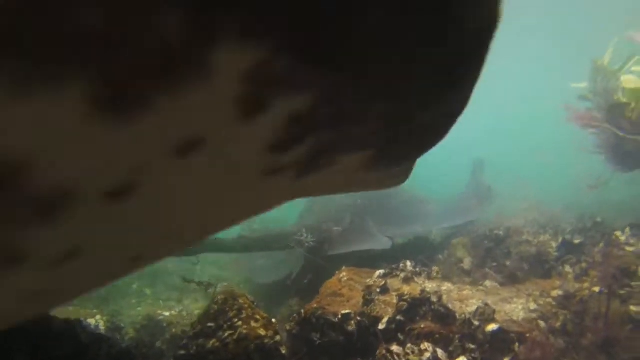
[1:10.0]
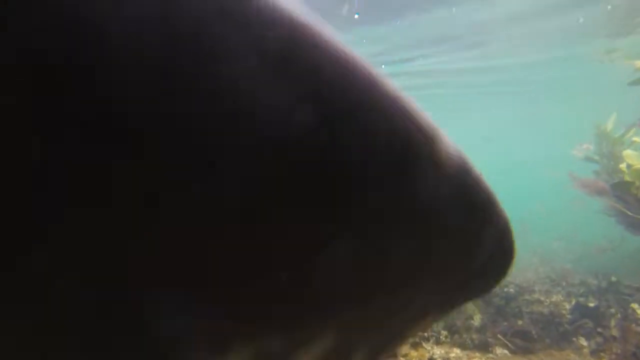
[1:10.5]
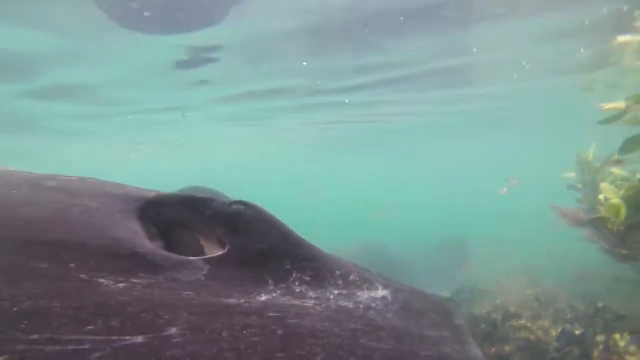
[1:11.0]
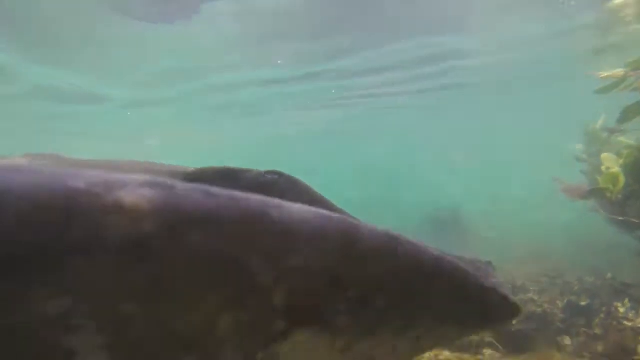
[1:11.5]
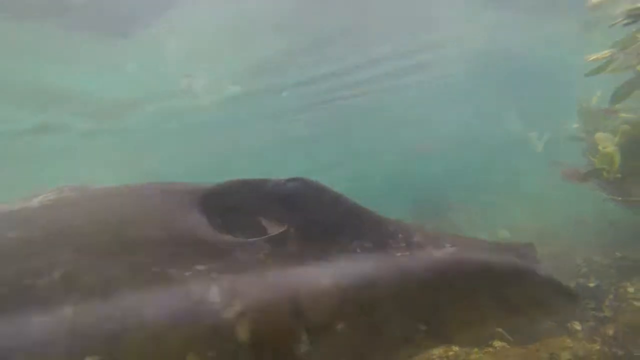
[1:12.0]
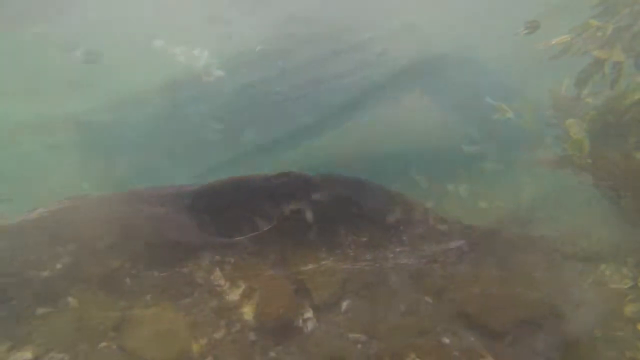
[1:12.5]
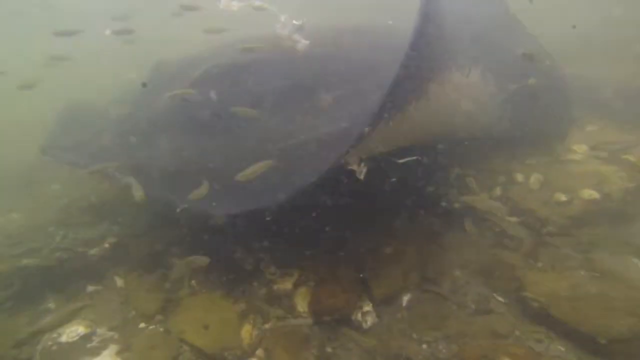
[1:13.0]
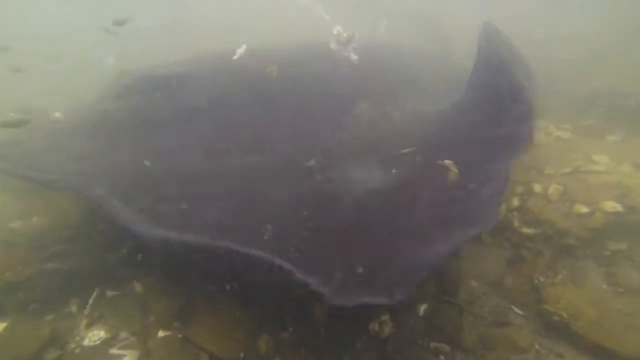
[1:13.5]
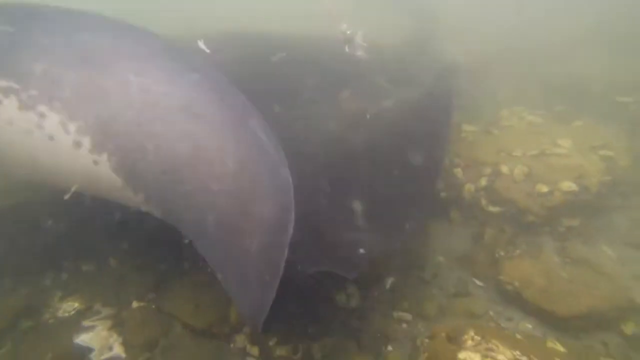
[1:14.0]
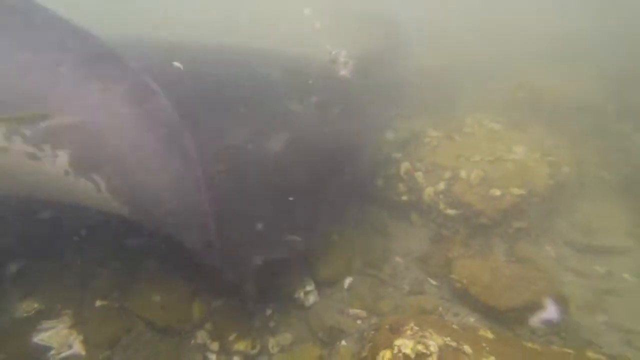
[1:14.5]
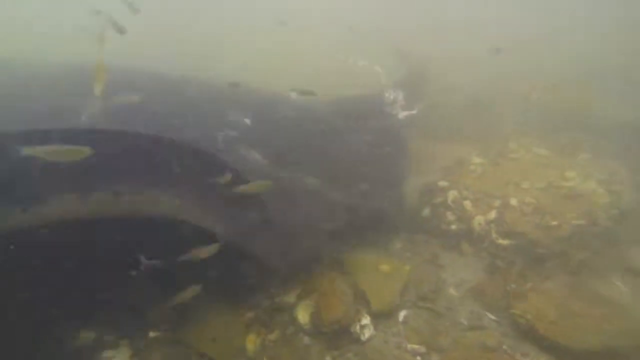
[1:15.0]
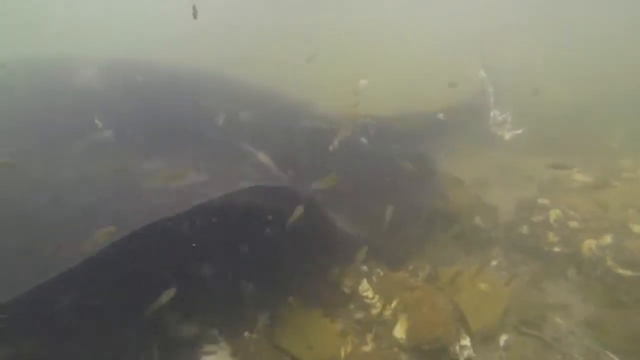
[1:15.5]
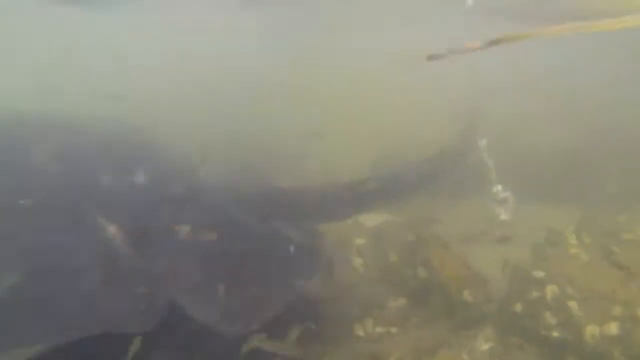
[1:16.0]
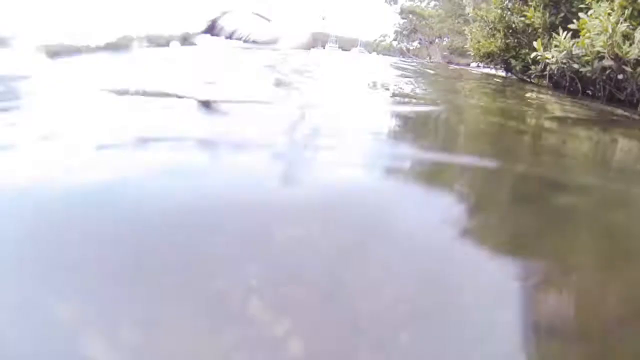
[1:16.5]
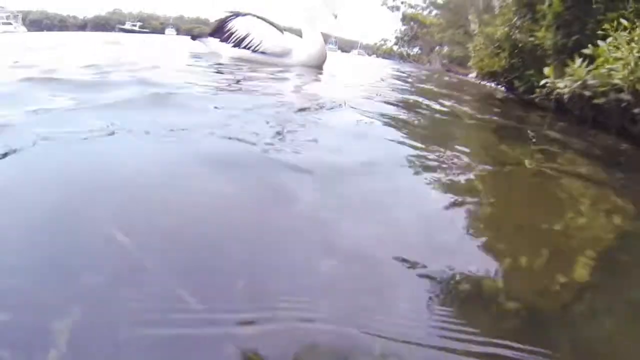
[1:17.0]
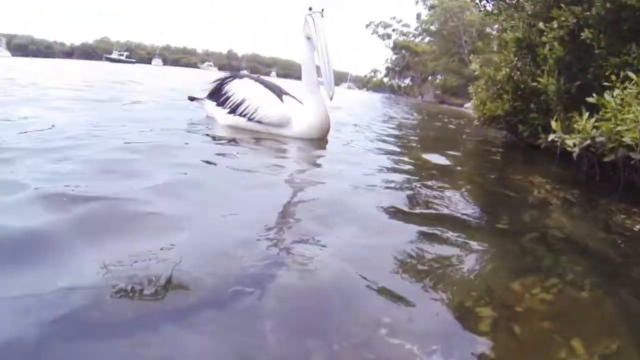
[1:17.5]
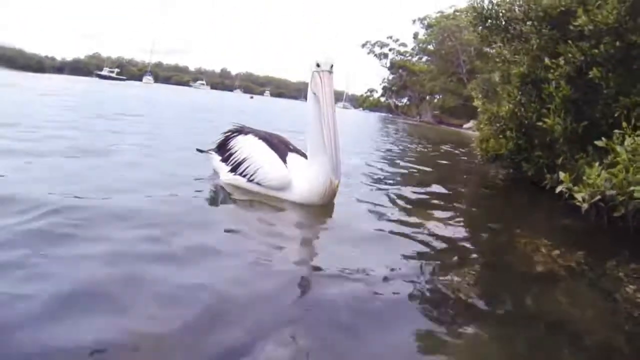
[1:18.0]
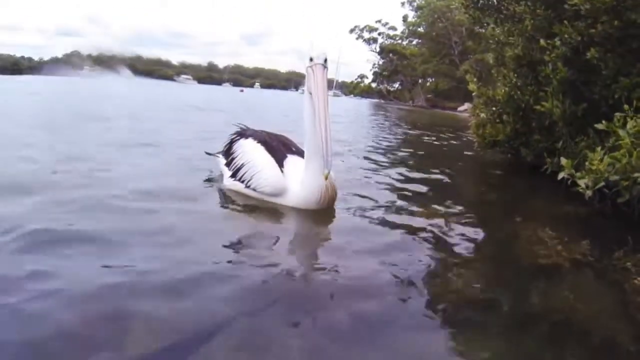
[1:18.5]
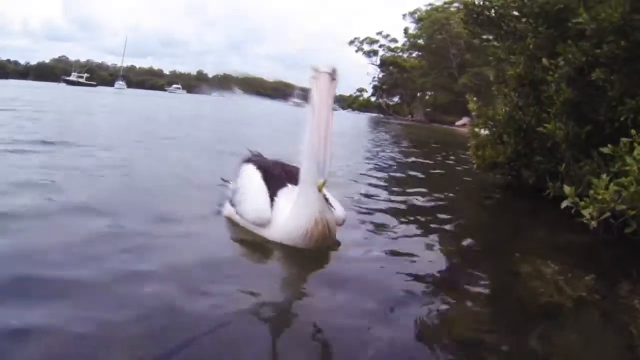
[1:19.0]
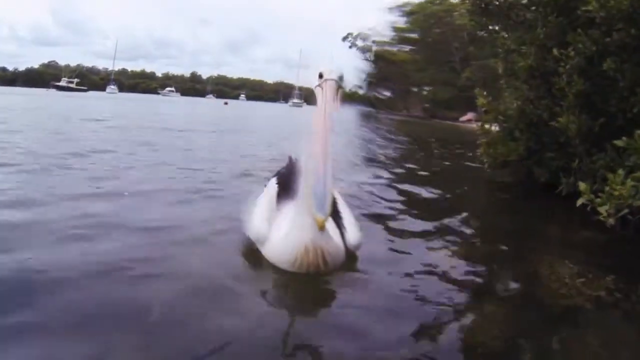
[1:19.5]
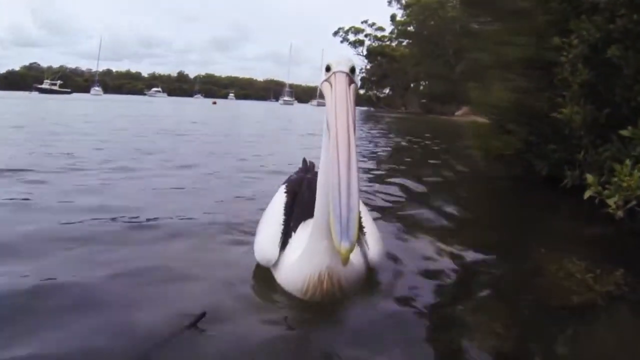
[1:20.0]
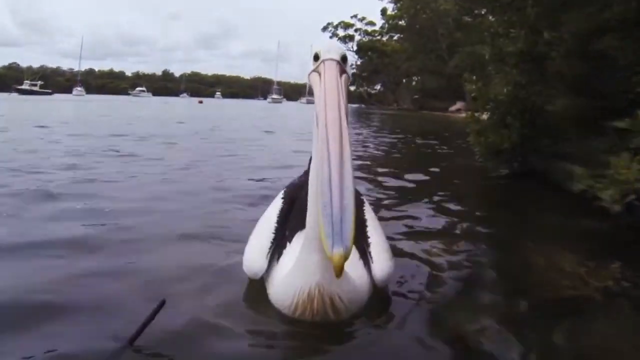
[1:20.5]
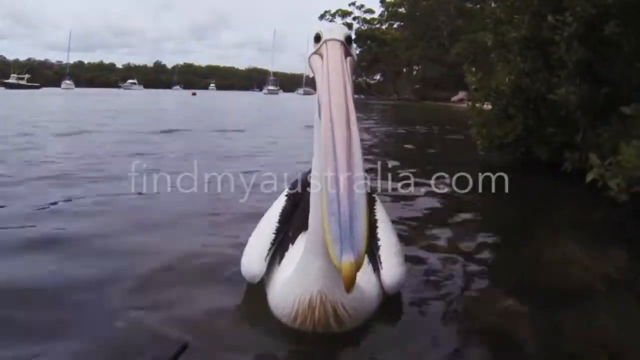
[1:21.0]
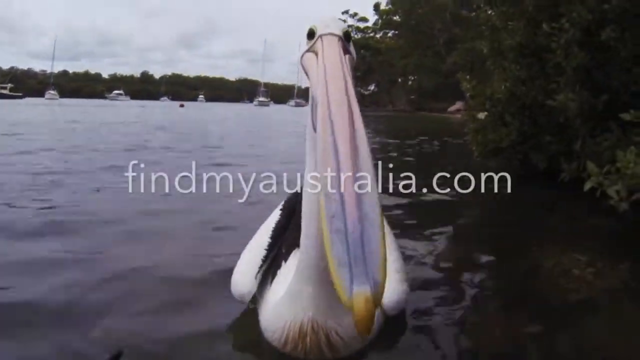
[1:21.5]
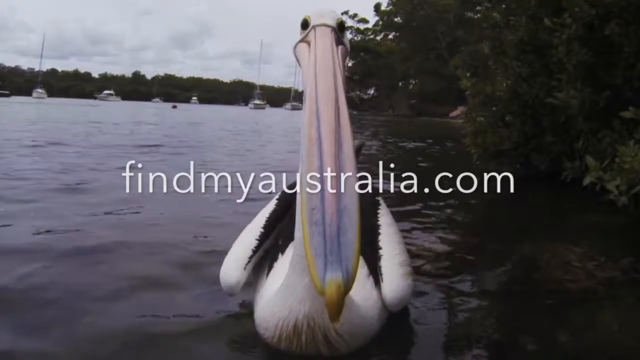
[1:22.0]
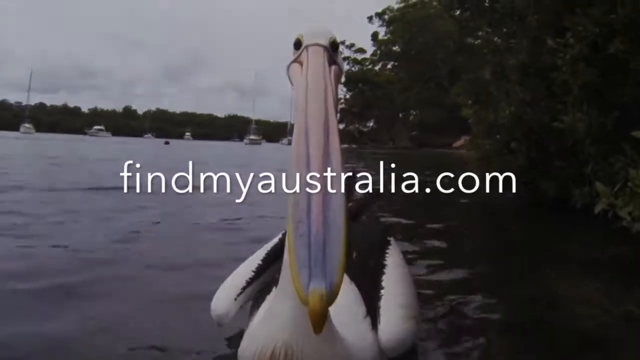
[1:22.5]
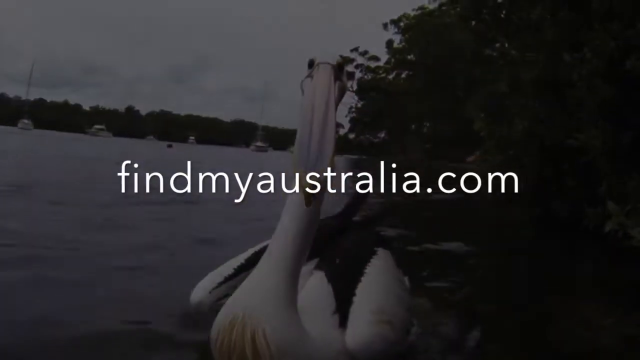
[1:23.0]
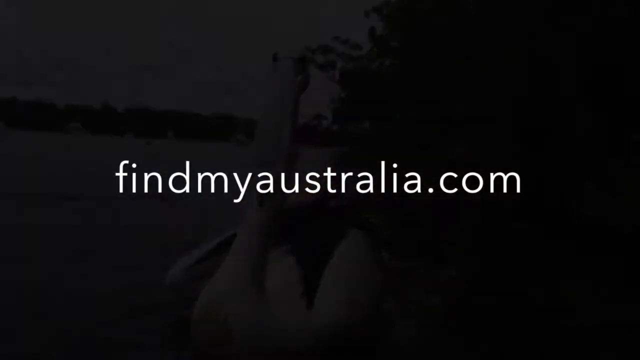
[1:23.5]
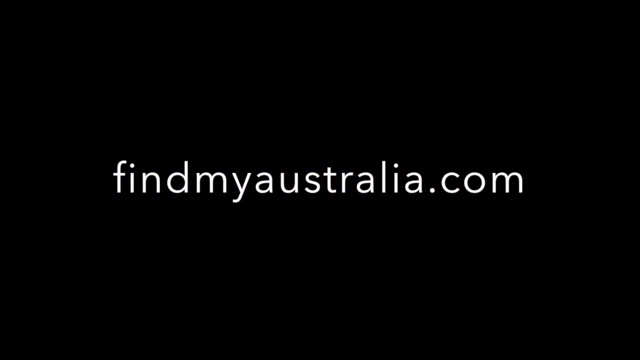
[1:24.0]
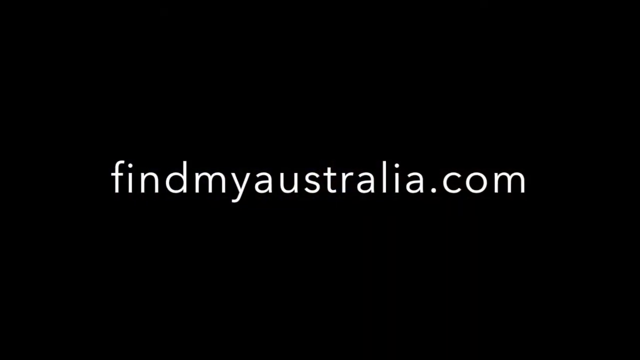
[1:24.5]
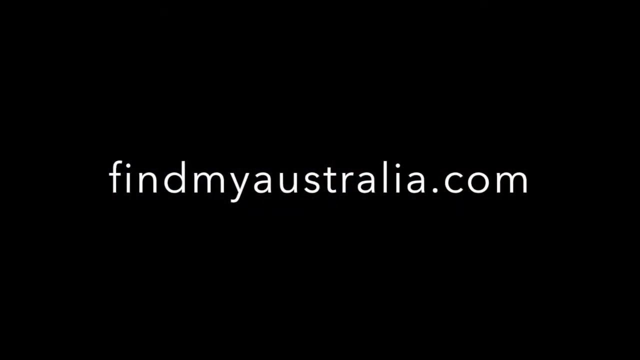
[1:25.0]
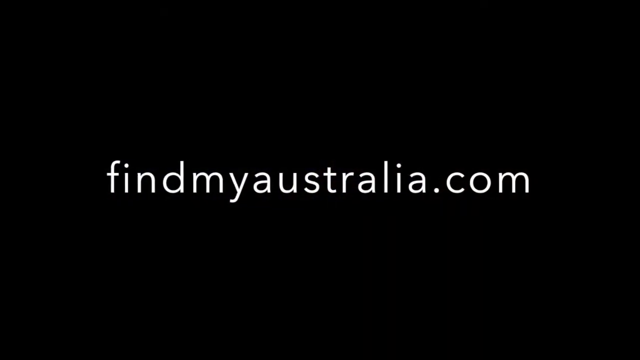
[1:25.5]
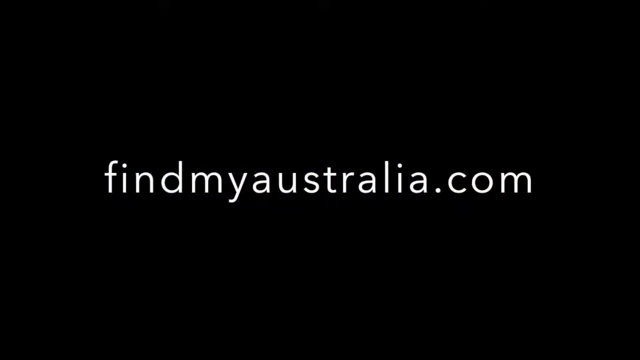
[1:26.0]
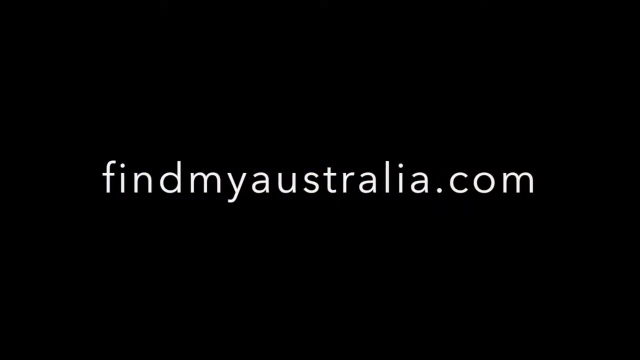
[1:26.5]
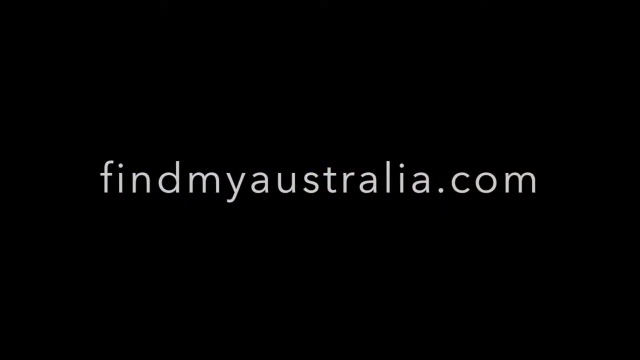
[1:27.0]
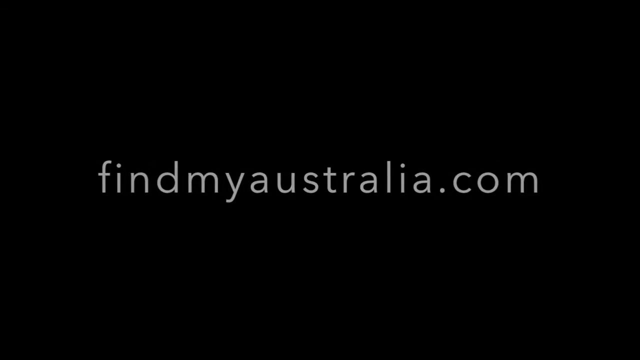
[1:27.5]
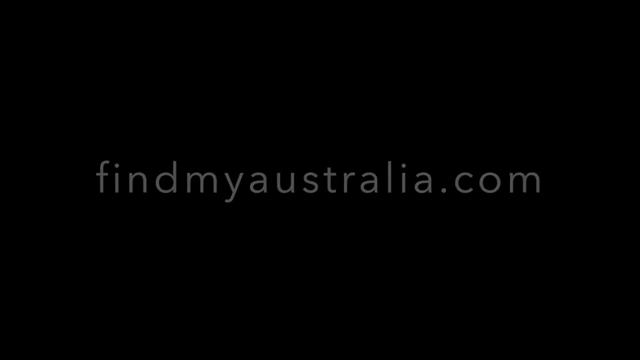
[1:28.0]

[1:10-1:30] The underside of the stingray close to the camera is visible as it turns around toward the other stingray. A blowhole or breathing apparatus near the top of its head can sort of be seen into, and the inside is a bit white. Its wings sort of cover up part of the camera view, and then the video sort of fades to a different shot of one of the stingrays as it sort of flaps its wing up and down while swimming to the left, disturbing a bunch of leaves in the water. The camera keeps looking at its tail before coming up out of the water. There is what appears to be a big pelican with a big beak looking at the camera. It is resting on the water with its mouth closed, its body facing to the right. Its wings are white on the inside with sort of black tips, and its back also seems to be a bit black. The pelican sort of gets close to the camera, showing that its beak is sort of blue on the inside, pinkish on the very inside, and yellow on the outside. The website "findmyaustralia.com" appears in the middle.